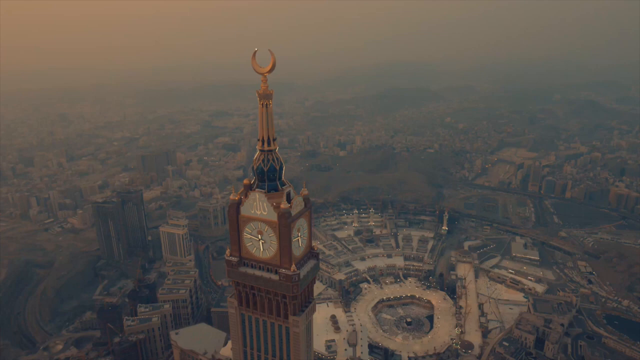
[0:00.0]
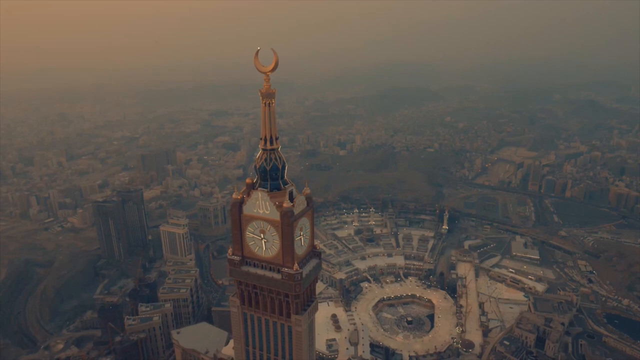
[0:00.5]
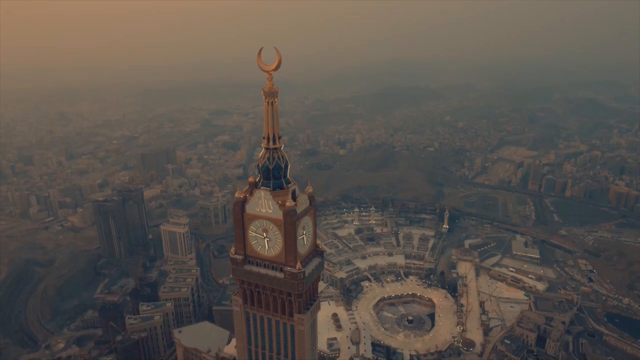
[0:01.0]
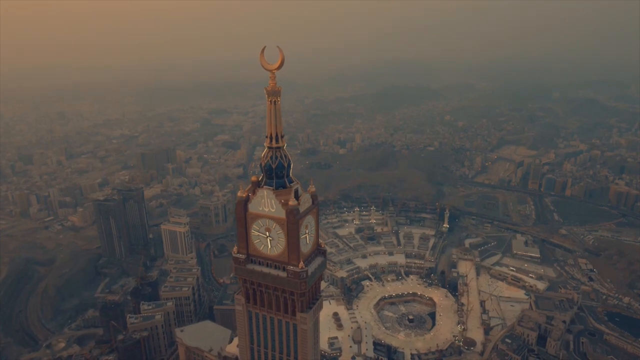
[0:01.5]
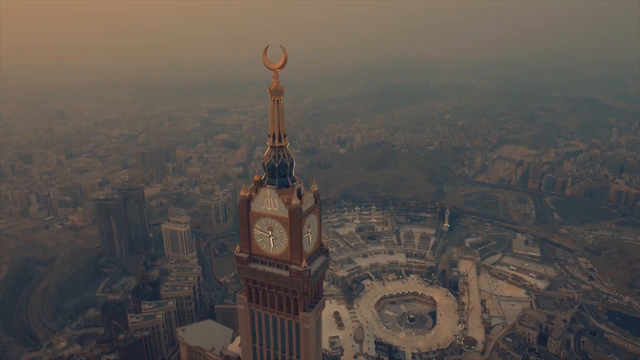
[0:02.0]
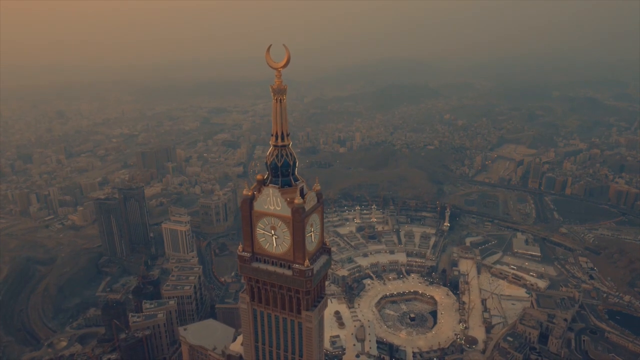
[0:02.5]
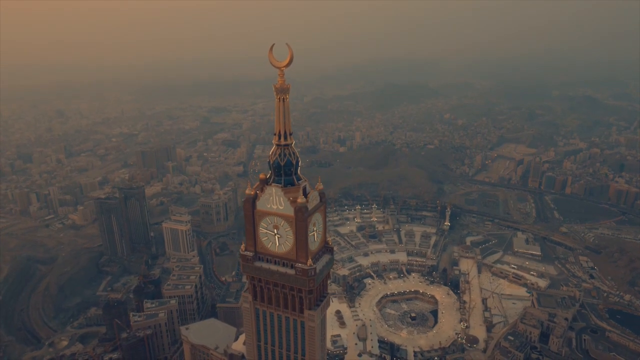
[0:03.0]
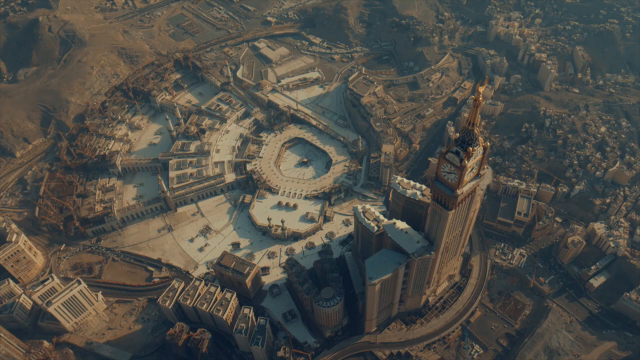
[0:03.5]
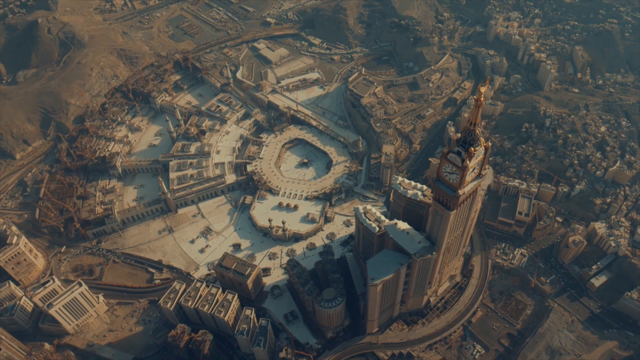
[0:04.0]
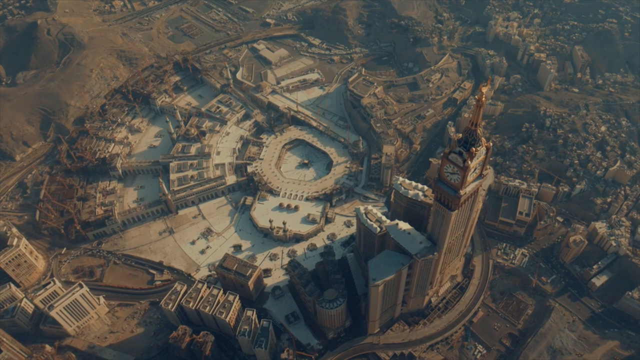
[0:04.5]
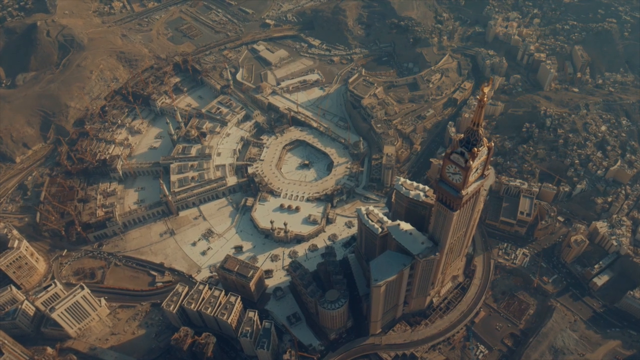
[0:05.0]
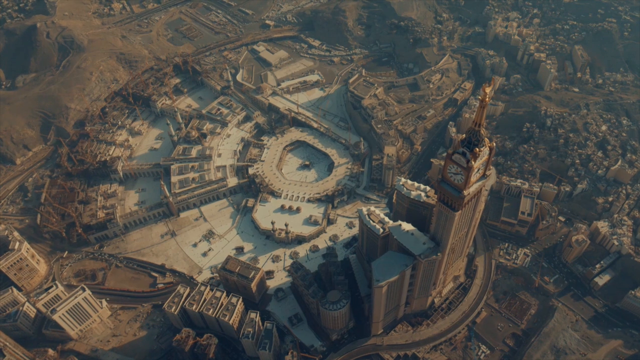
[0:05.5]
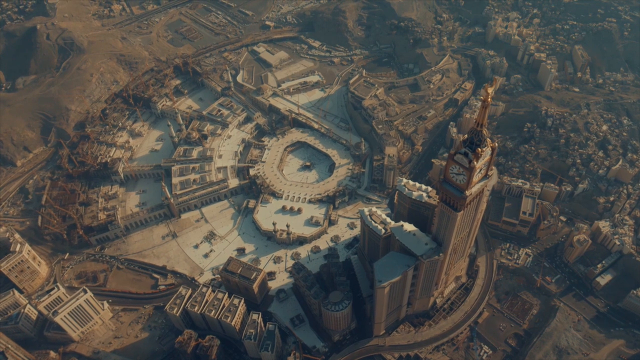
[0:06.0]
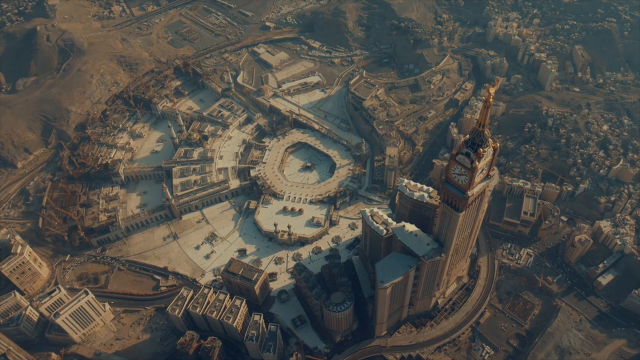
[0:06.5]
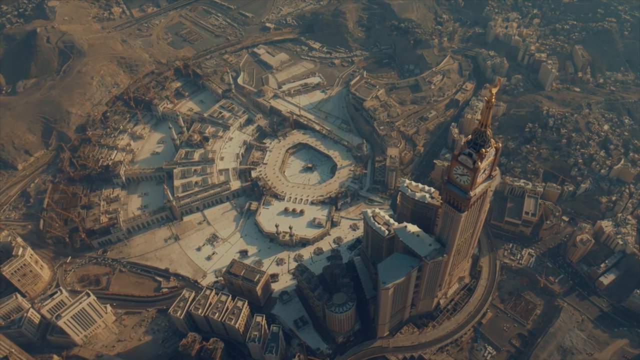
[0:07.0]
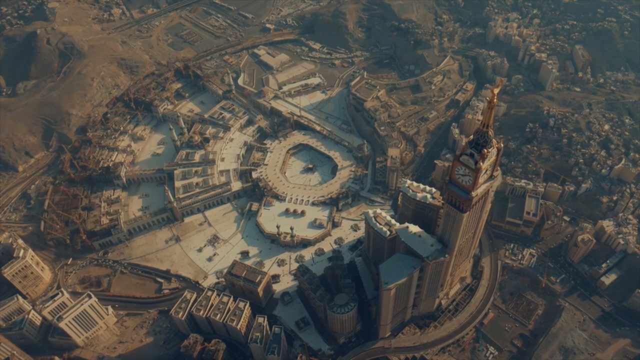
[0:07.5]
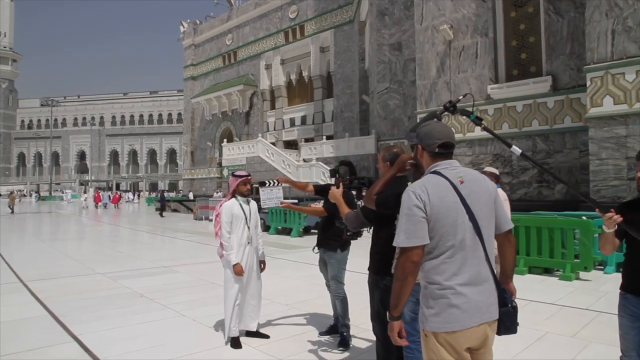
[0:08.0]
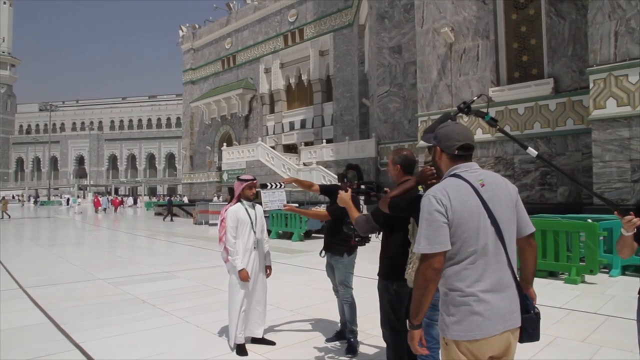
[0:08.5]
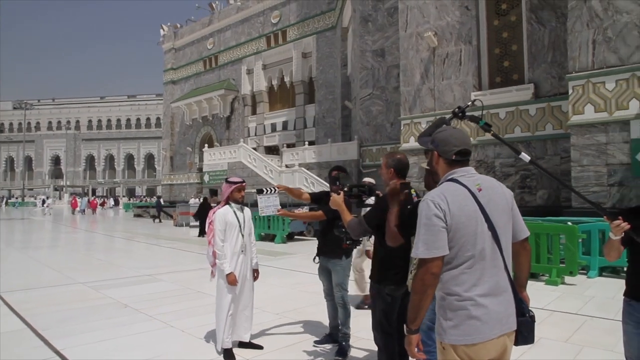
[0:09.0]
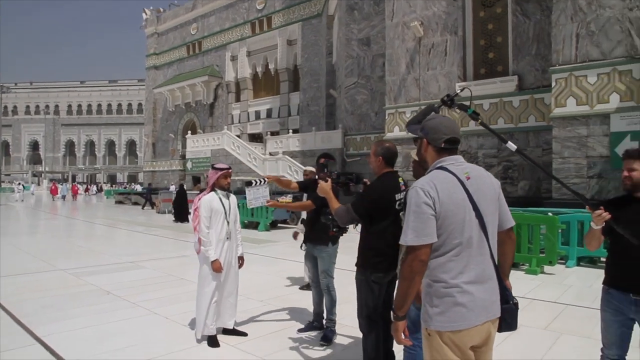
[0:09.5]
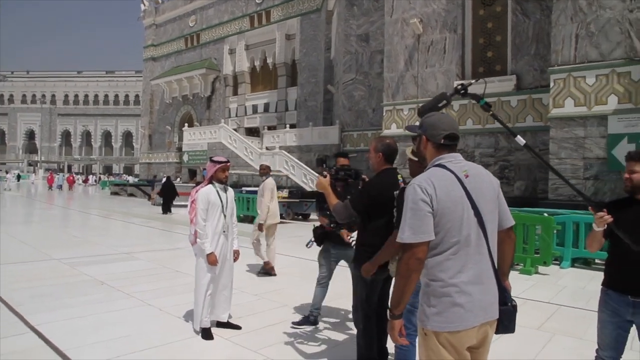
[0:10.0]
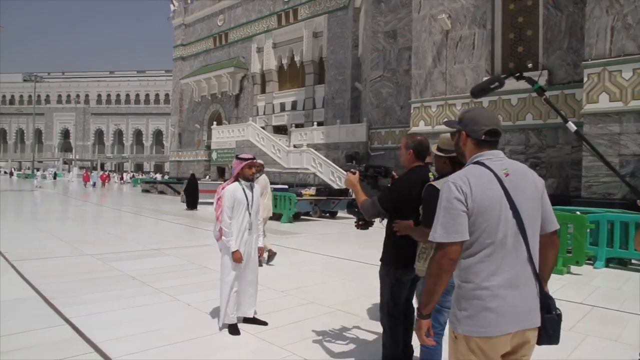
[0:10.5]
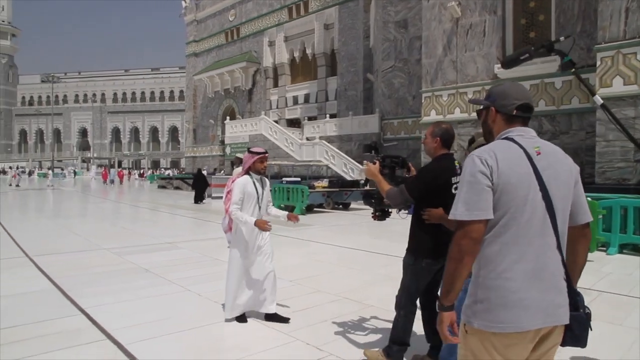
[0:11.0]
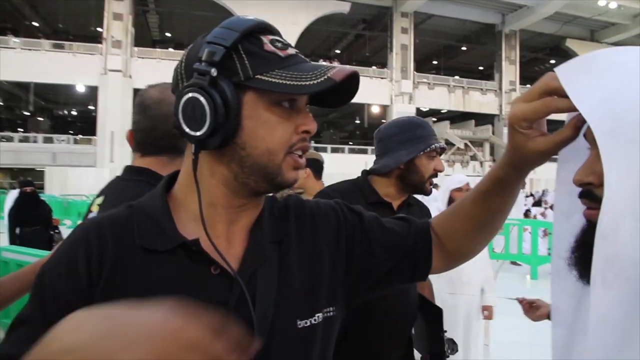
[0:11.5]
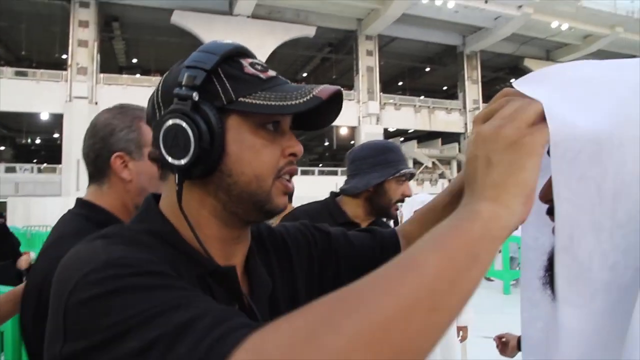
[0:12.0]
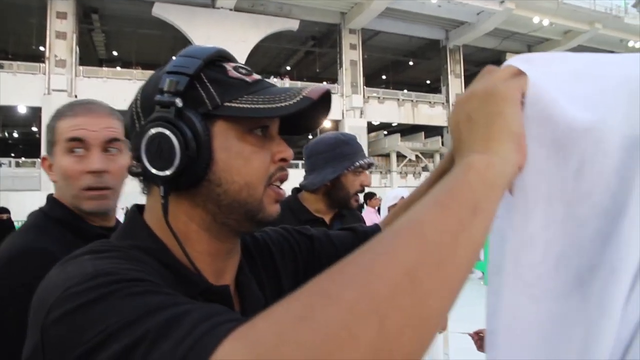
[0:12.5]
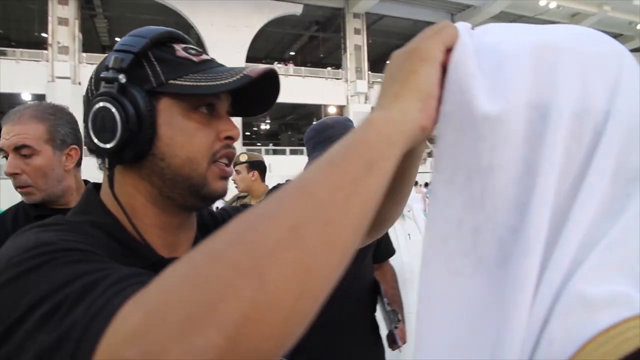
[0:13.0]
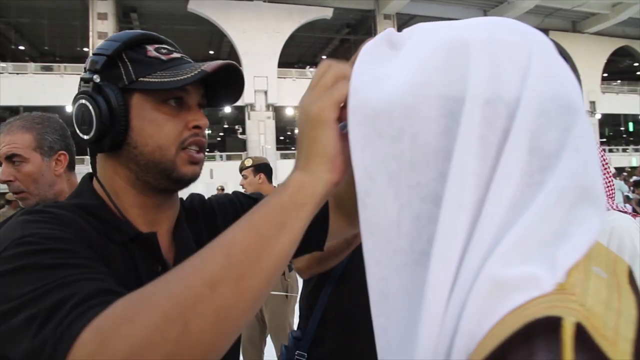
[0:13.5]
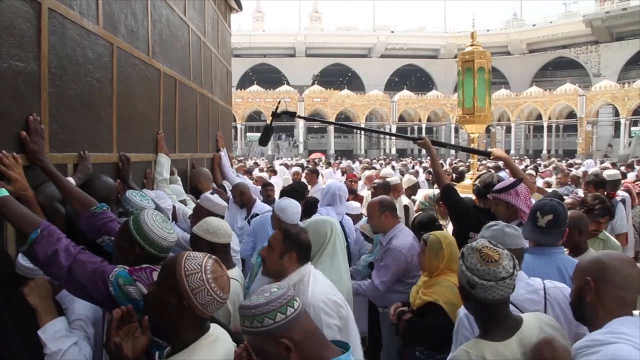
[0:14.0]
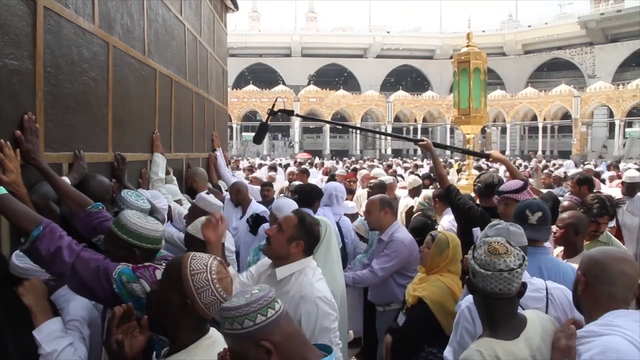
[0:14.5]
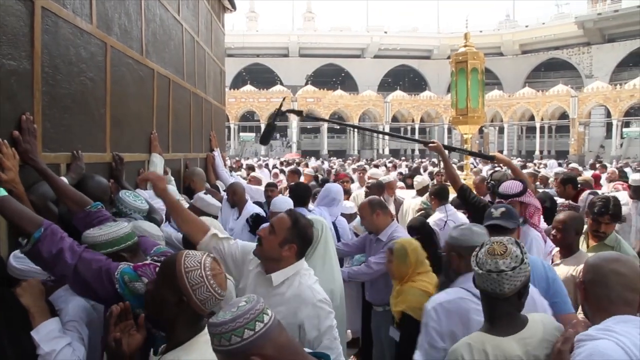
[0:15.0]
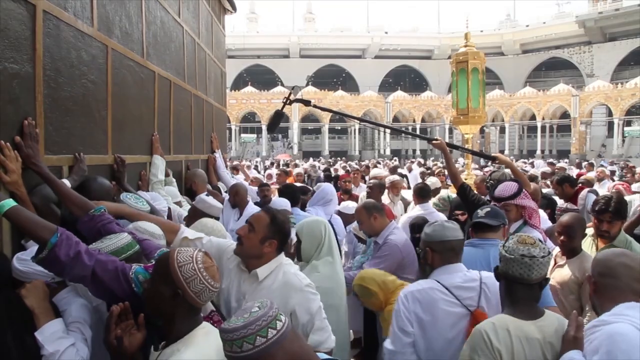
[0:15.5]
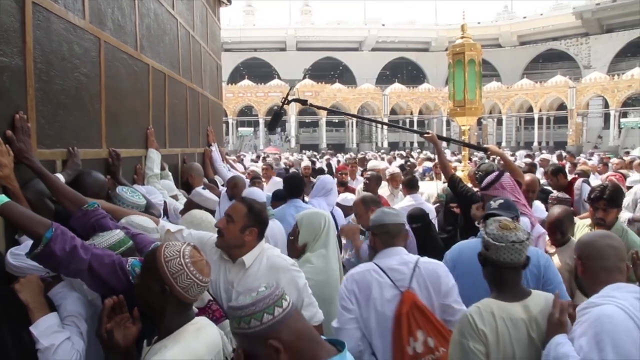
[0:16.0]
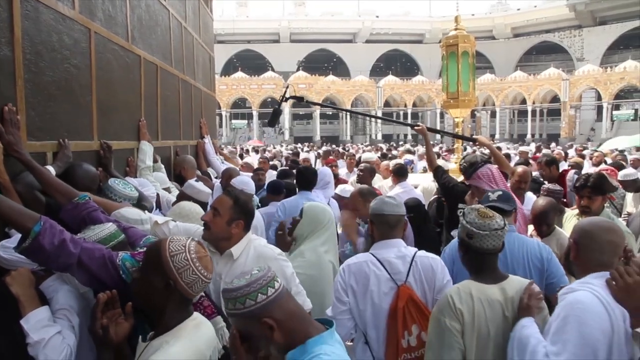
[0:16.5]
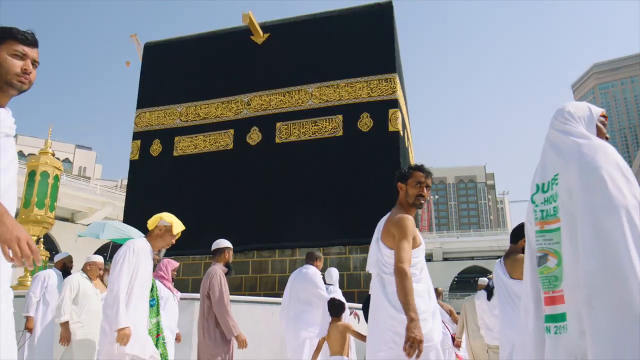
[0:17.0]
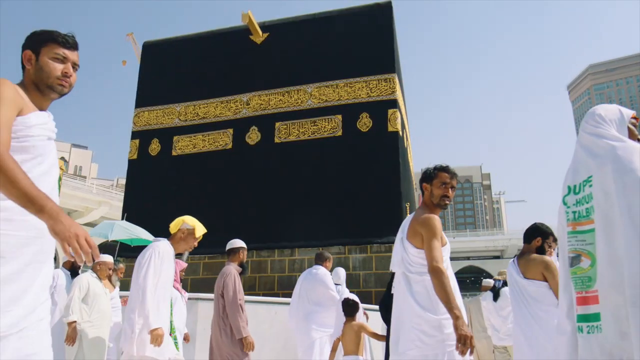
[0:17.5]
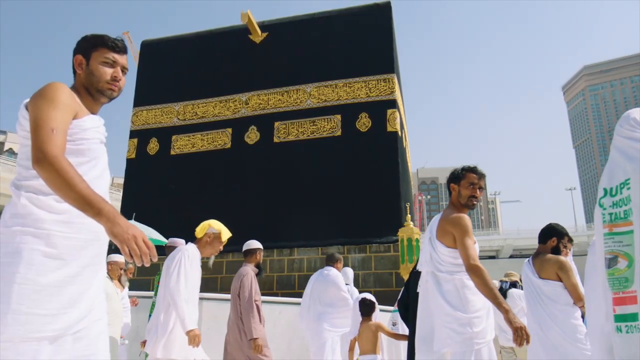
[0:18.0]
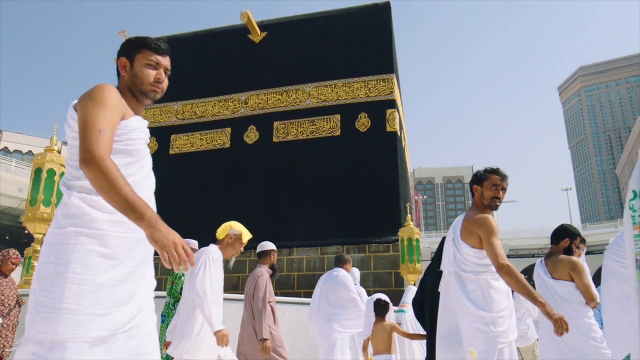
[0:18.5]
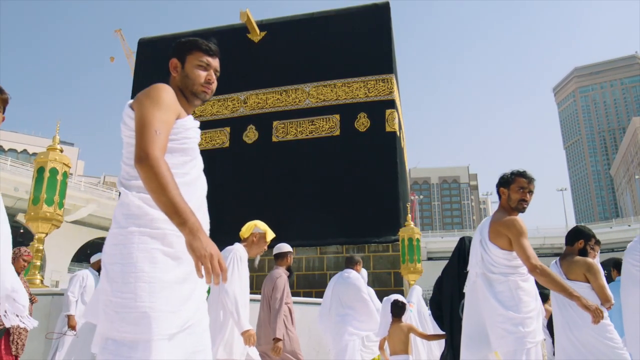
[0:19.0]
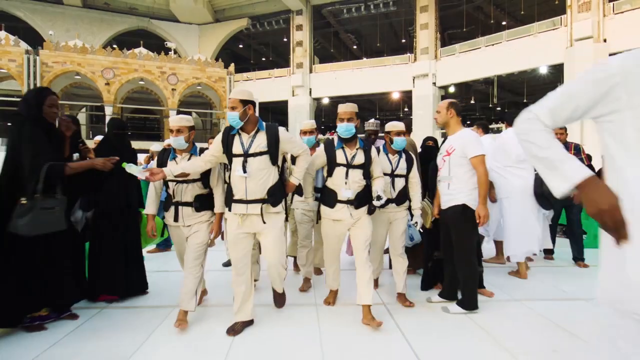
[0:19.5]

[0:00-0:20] A building that looks like a mosque has a clock on its side. A whole city is shown from above, like from a drone, with the view circling around the city. Then an Arabic man wearing robes is being filmed. Outside the mosque, people are praying, wearing robes for prayer, and Arab people are walking and going around the city. The film crew is also filming the people praying at a place that looks like a very holy place. Later, the crew walks around wearing masks. Crew members are holding cameras and mics, showing that this is part of a movie being filmed in an Arab city where people wear robes.